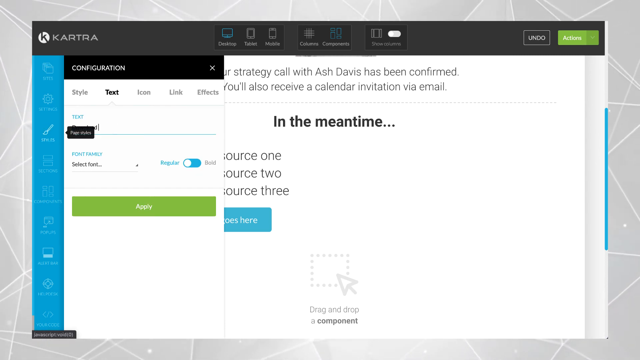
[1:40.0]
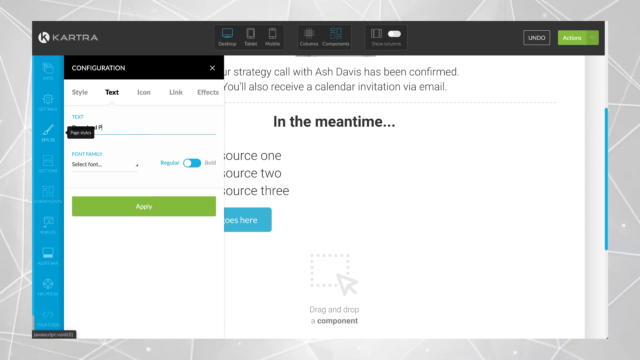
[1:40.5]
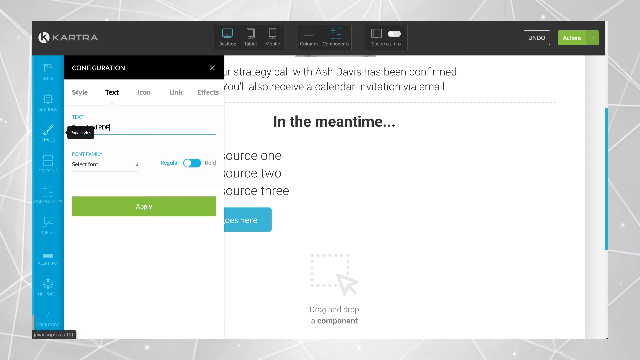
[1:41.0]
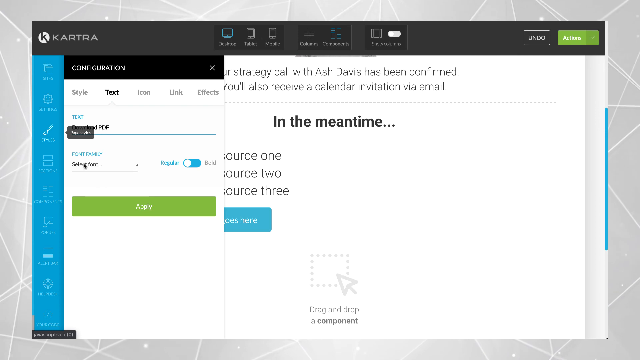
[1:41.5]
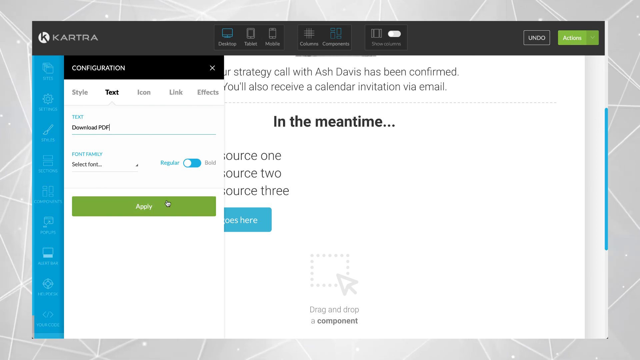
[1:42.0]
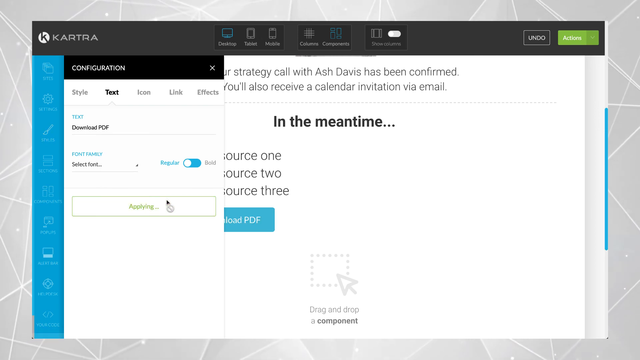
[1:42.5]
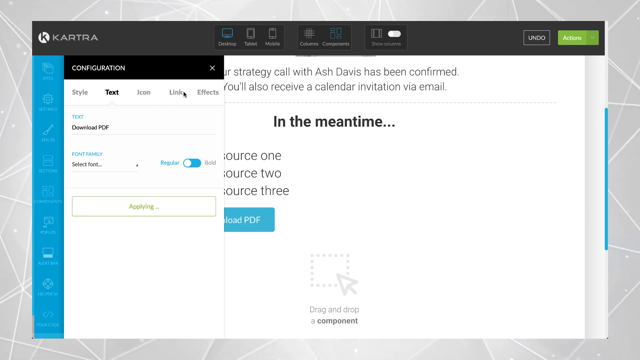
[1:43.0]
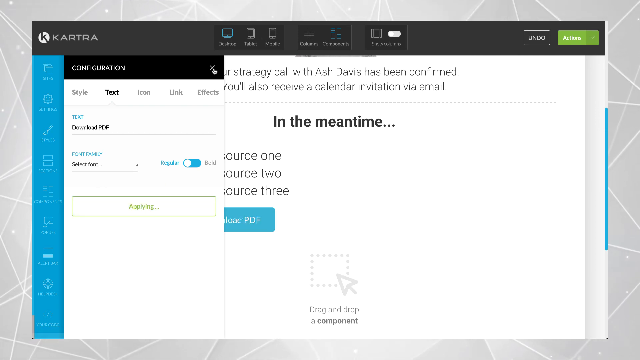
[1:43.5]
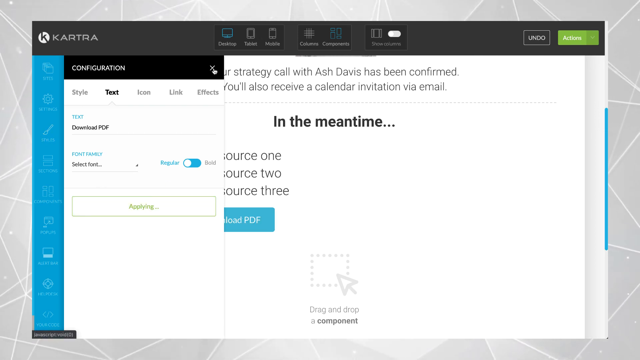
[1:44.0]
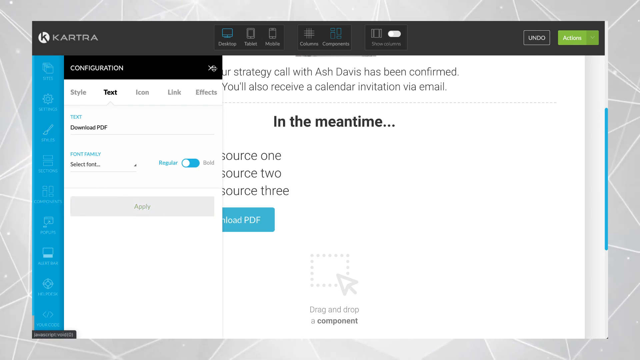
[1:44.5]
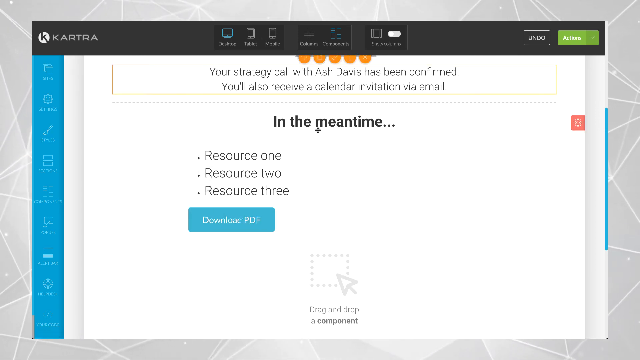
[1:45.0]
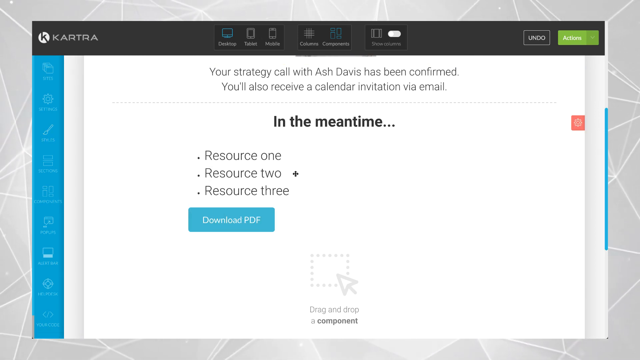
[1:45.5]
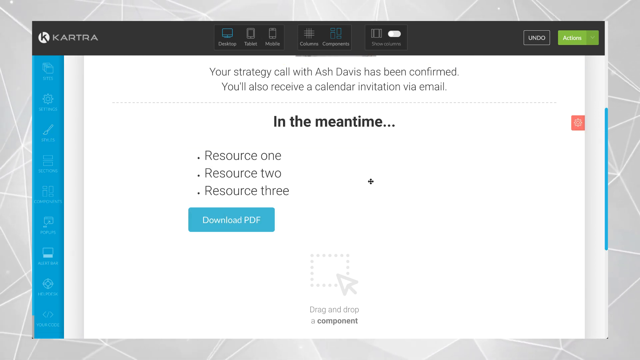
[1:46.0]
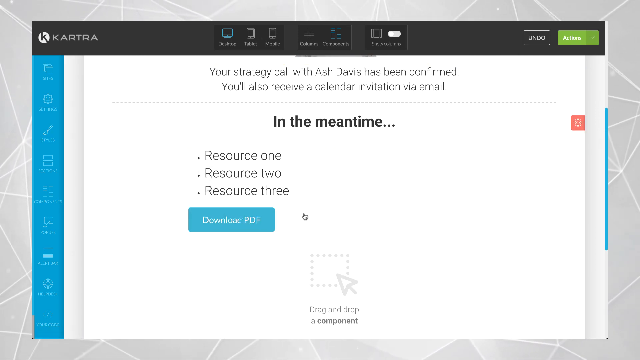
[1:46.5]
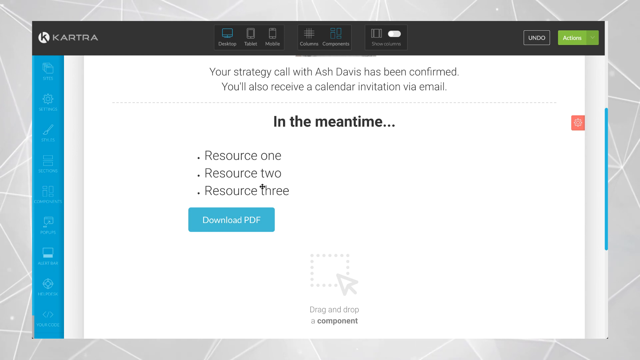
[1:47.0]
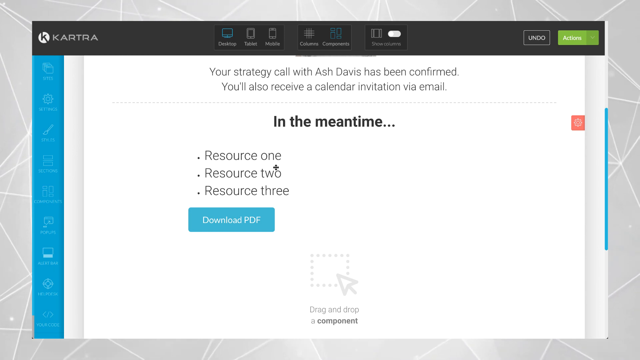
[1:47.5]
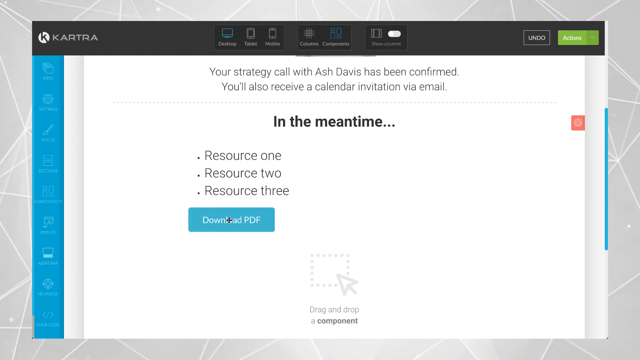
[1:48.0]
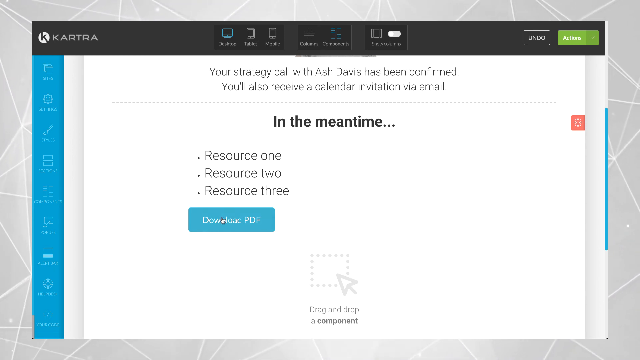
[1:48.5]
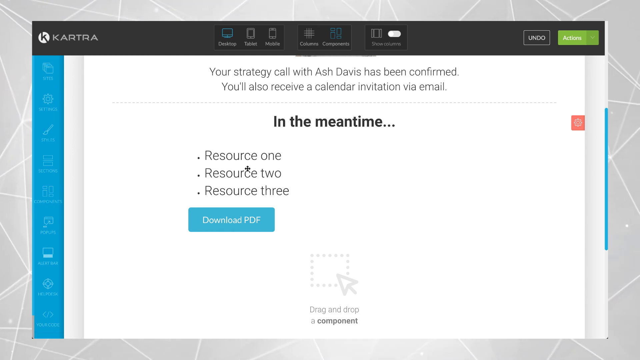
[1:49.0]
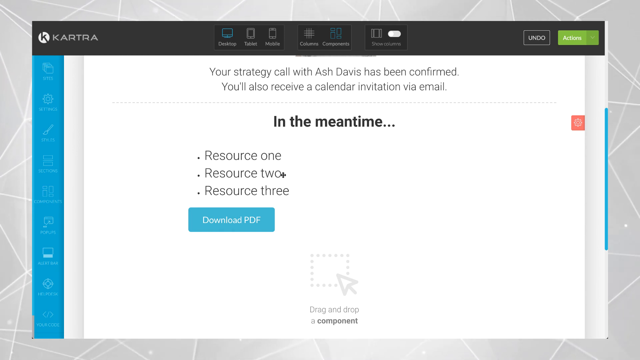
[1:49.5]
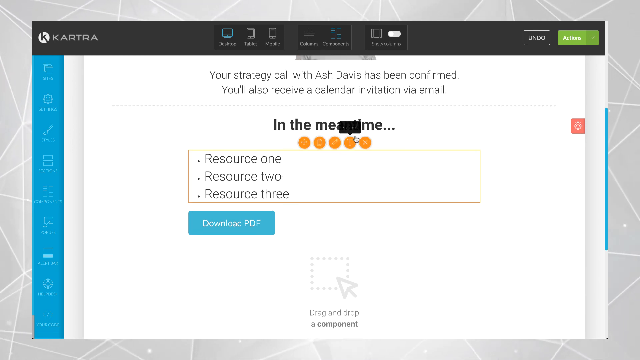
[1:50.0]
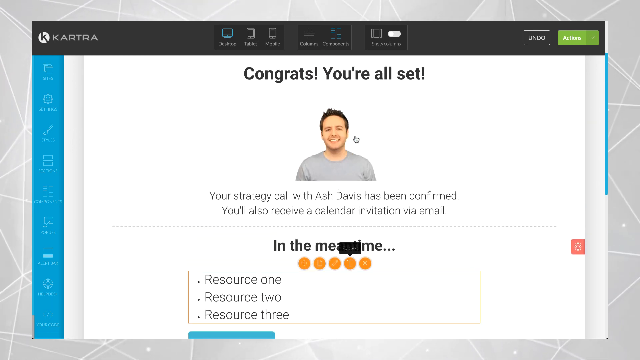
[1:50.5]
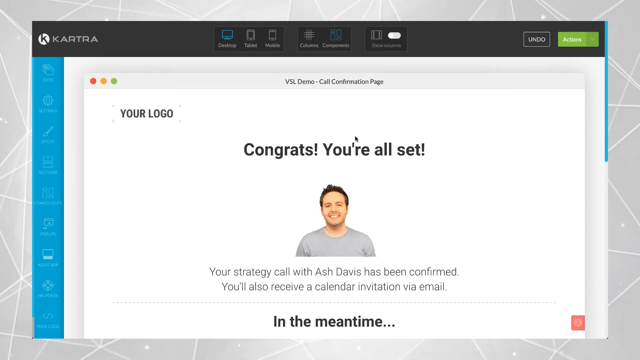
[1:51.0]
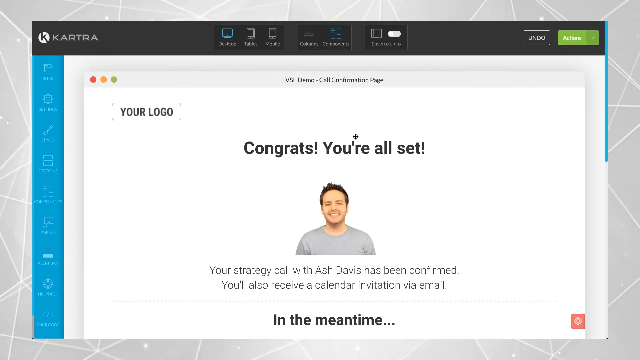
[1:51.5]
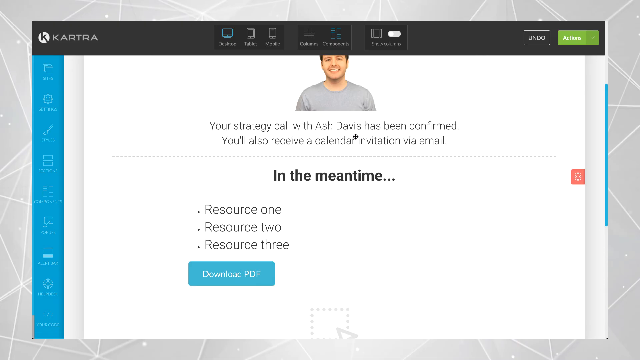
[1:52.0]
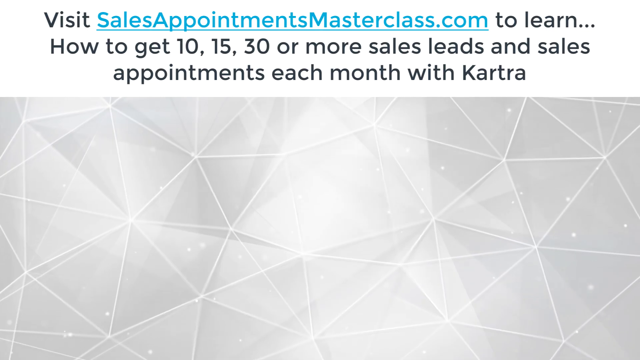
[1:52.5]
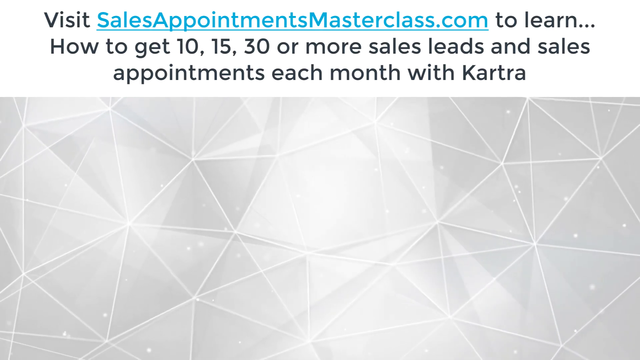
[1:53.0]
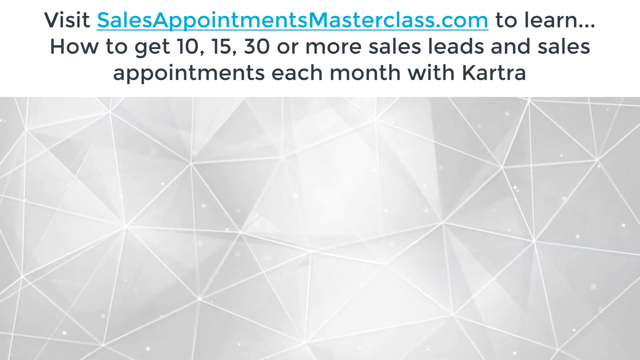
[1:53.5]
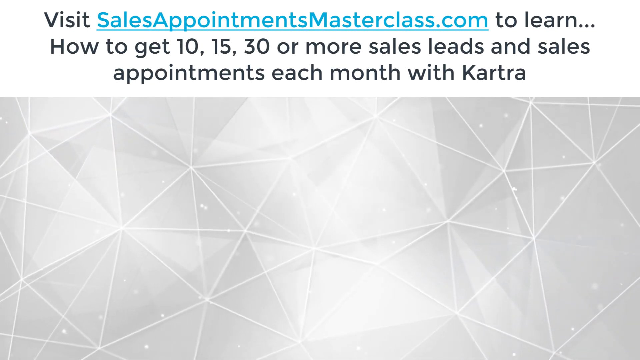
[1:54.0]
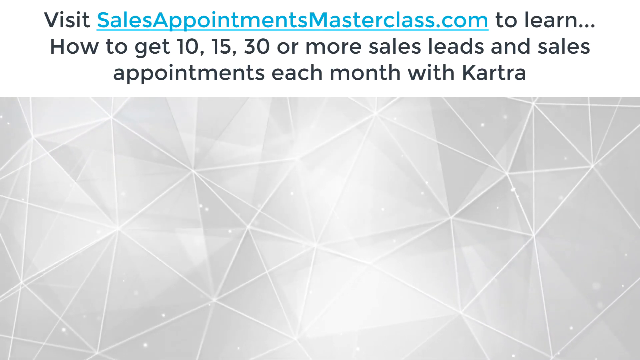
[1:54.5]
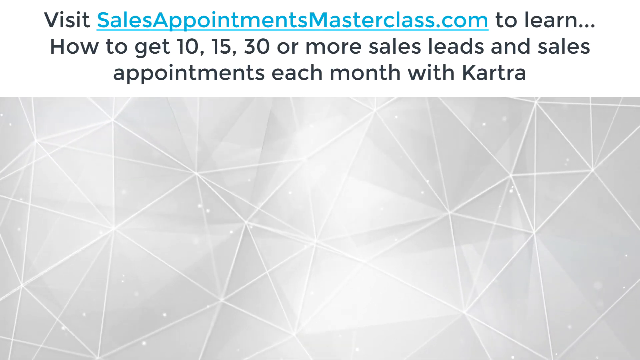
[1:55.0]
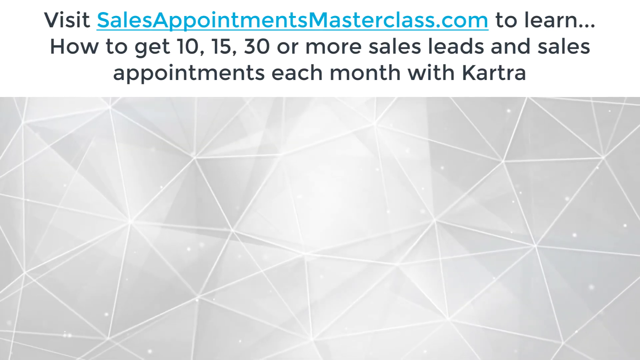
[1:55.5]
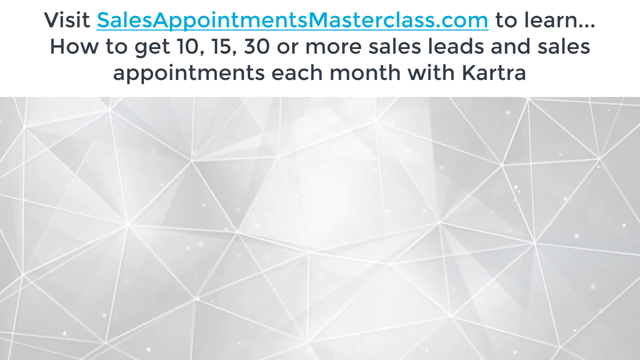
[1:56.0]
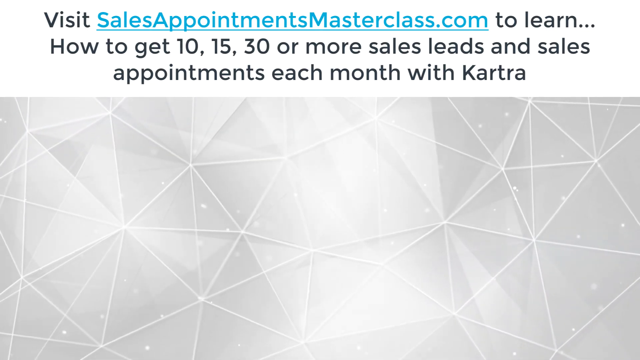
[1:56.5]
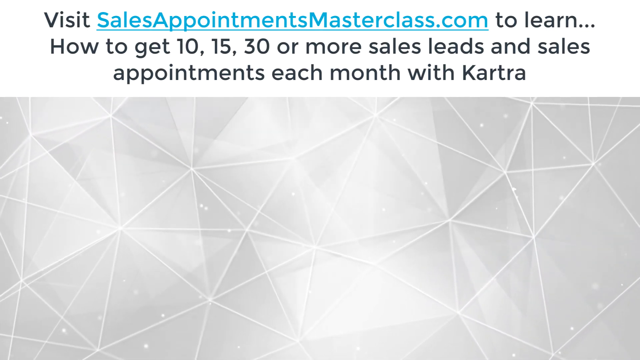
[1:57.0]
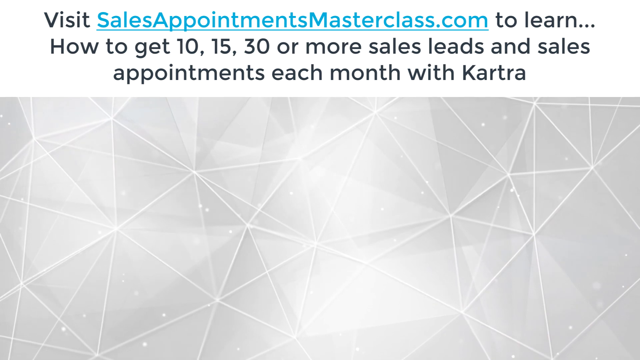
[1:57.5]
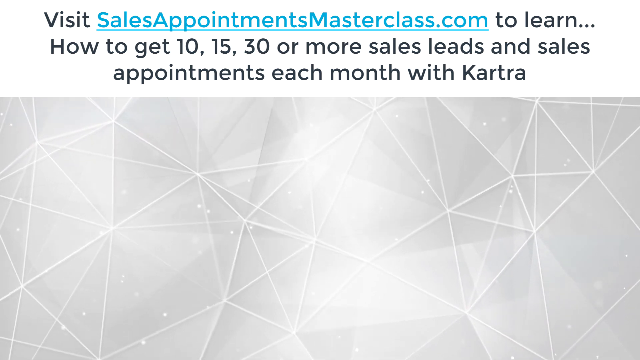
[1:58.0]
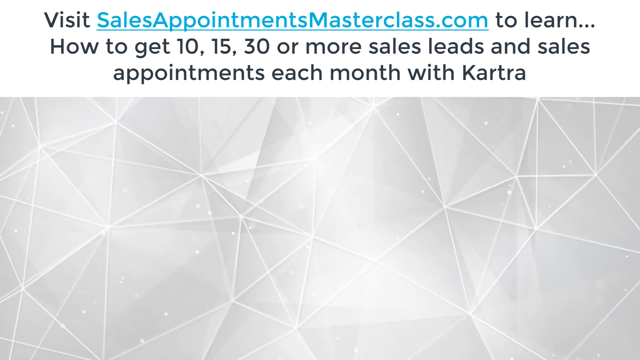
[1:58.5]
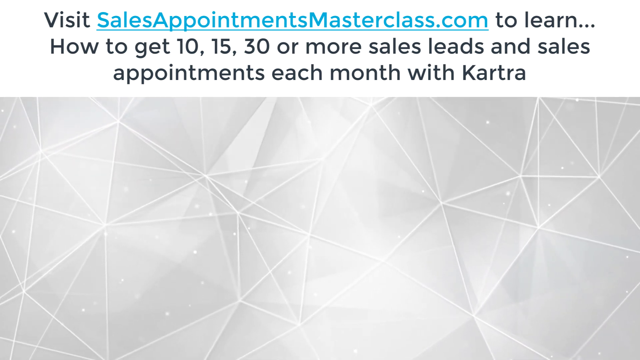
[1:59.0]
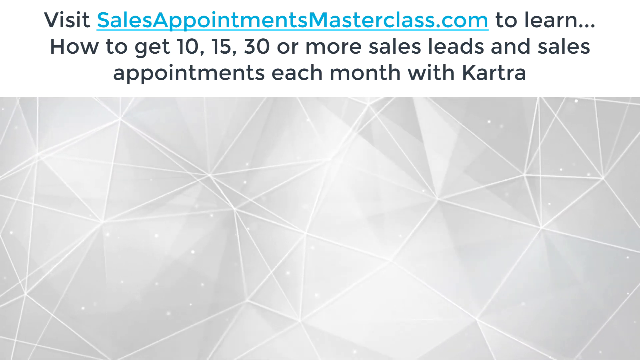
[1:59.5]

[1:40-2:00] At the top of the web page it says Kartra, the brand. Someone types "download PDF" into a text box in a configuration screen and clicks the Apply button, then clicks the X to exit that screen. "Download PDF" now shows in a blue box on the web page that appears to be being built. The mouse runs across the square of text with resource 1, resource 2, resource 3, and the page scrolls back up briefly to a portion that says "congrats, you're all set," with a picture of a man with dark hair and a gray shirt. It then appears that the text "your strategy call with Ash Davis has been confirmed. You'll also receive a calendar invitation via e-mail" is clicked. The video then goes to a screen that says "visit salesappointmentsmasterclass.com to learn" and "how to get 10, 15, 30, or more sales leads and sales appointments each month with Kartra." Below that is an image of moving, diamond-type silver shapes.